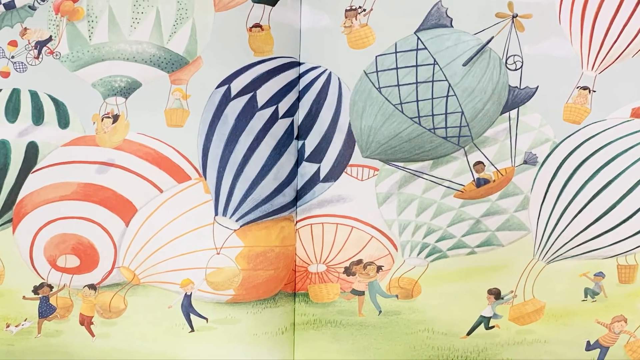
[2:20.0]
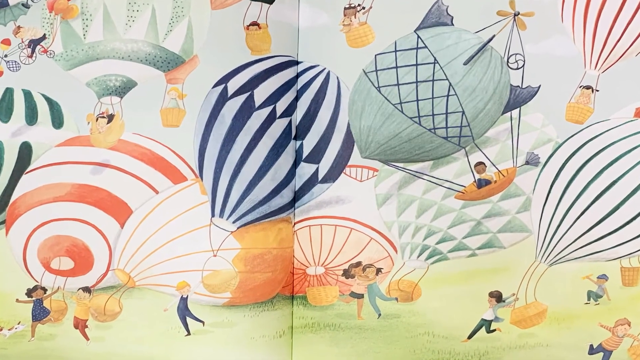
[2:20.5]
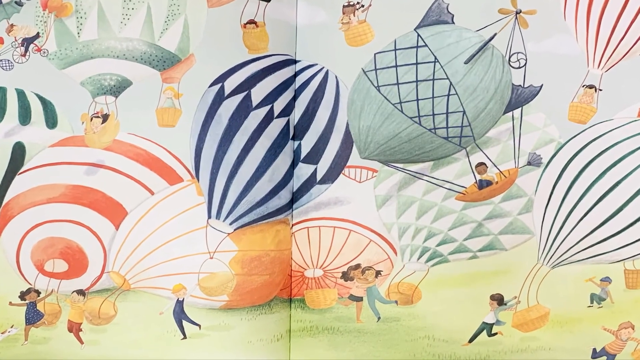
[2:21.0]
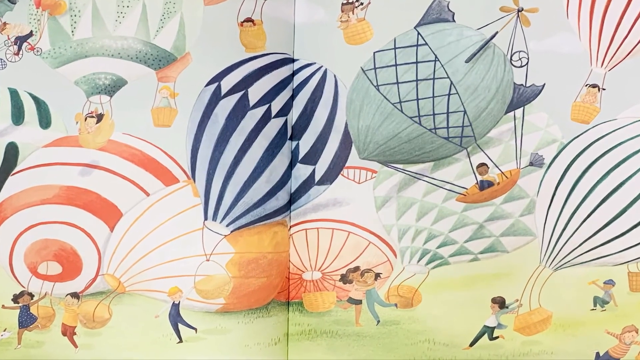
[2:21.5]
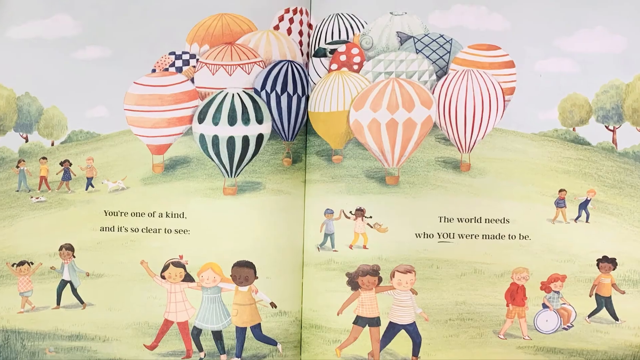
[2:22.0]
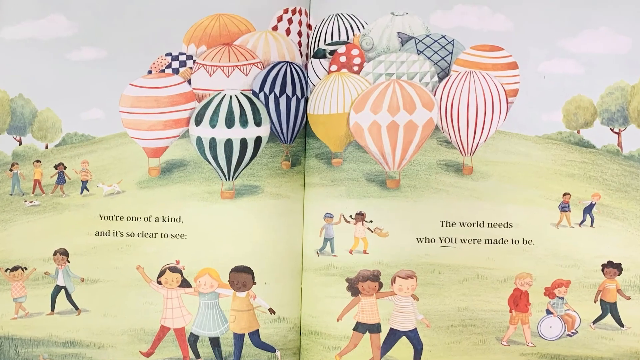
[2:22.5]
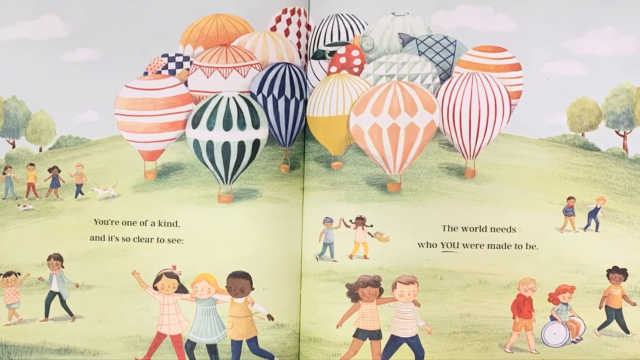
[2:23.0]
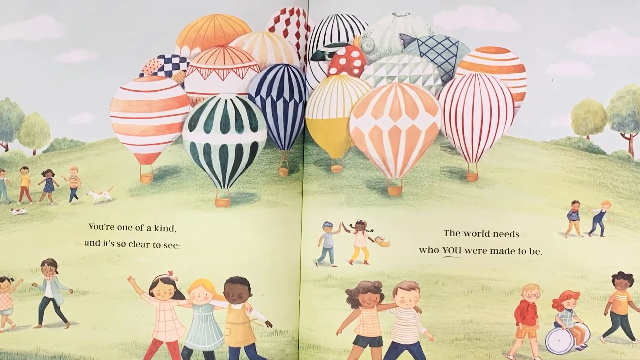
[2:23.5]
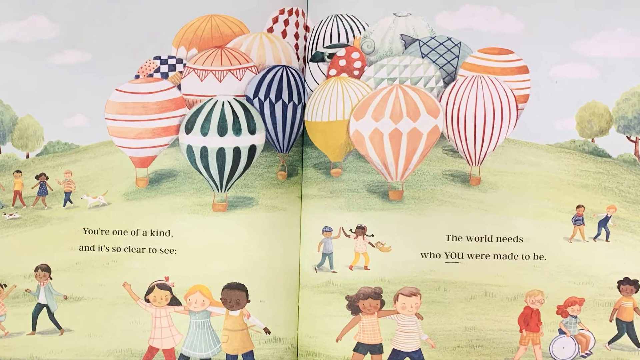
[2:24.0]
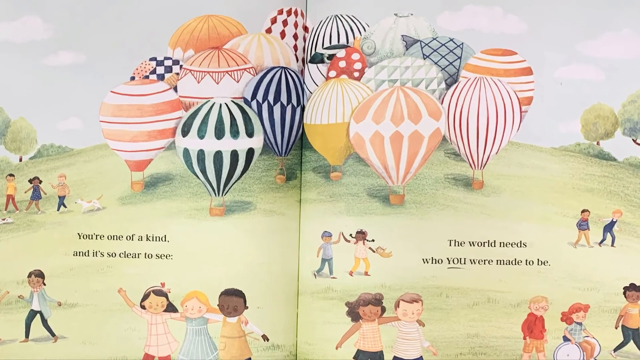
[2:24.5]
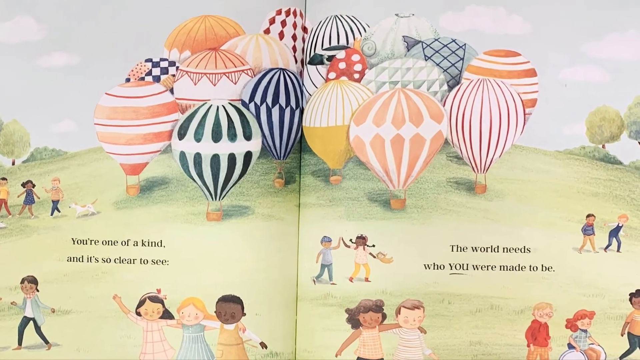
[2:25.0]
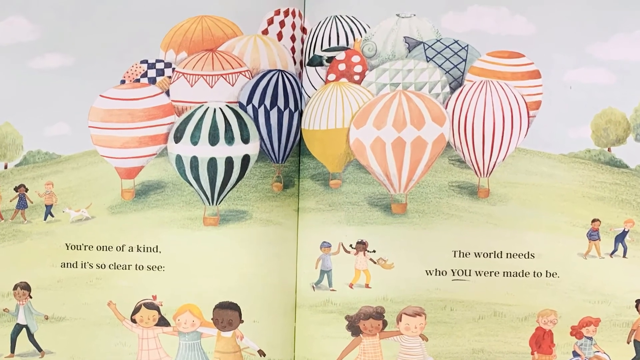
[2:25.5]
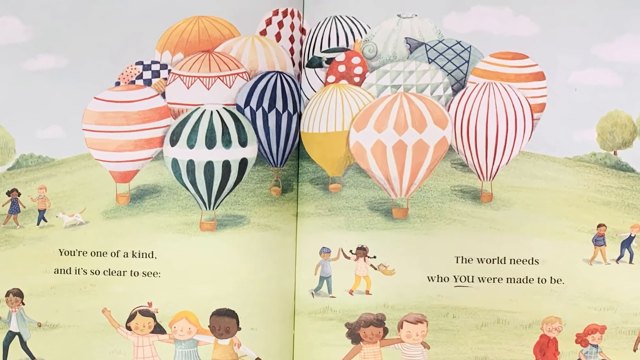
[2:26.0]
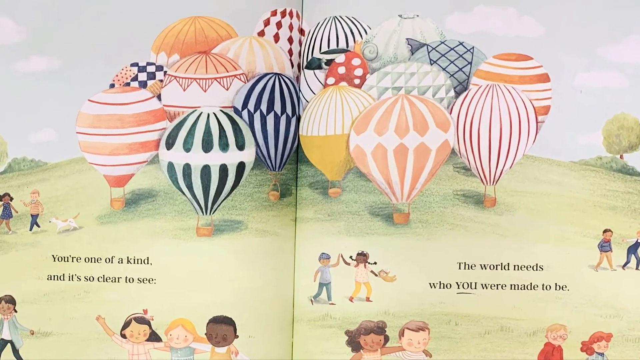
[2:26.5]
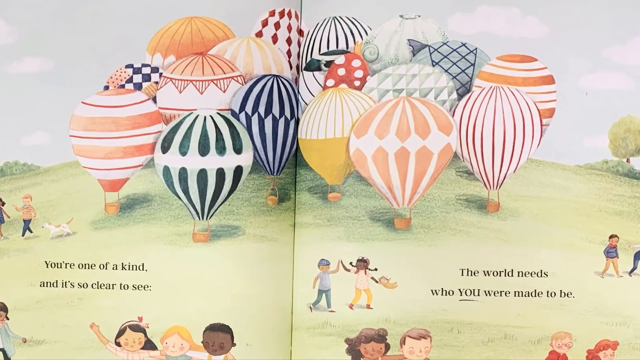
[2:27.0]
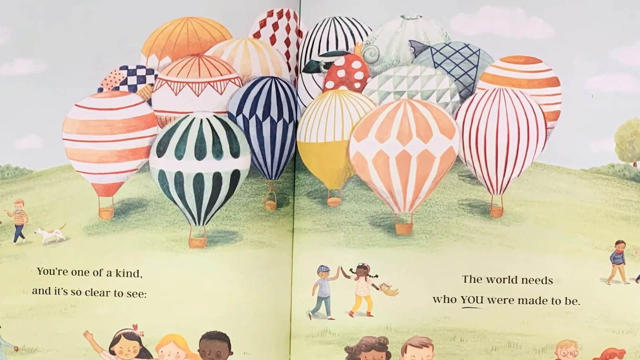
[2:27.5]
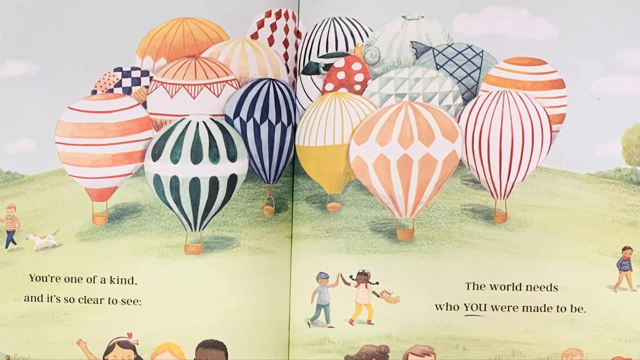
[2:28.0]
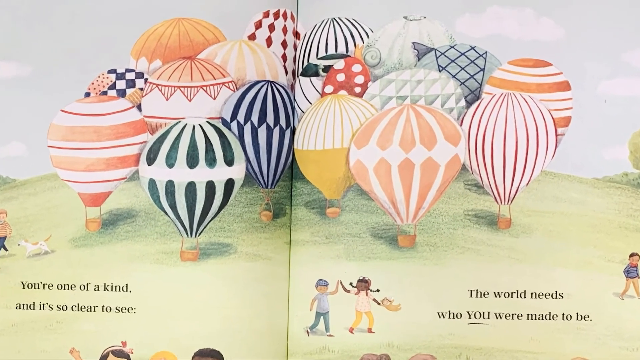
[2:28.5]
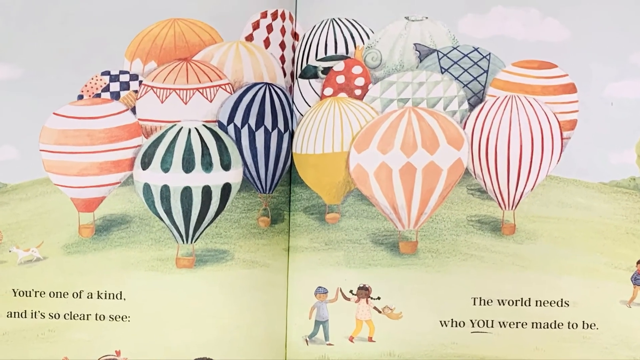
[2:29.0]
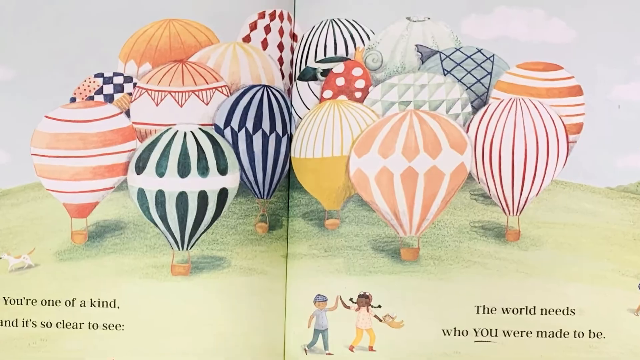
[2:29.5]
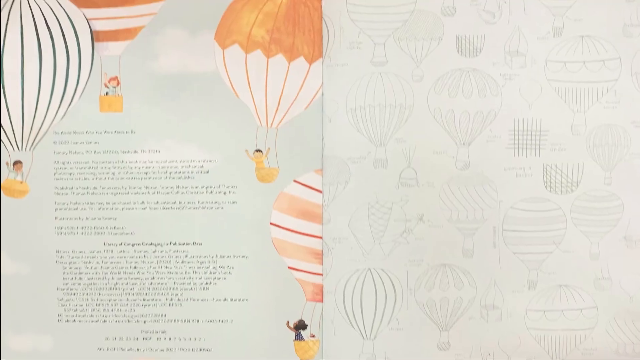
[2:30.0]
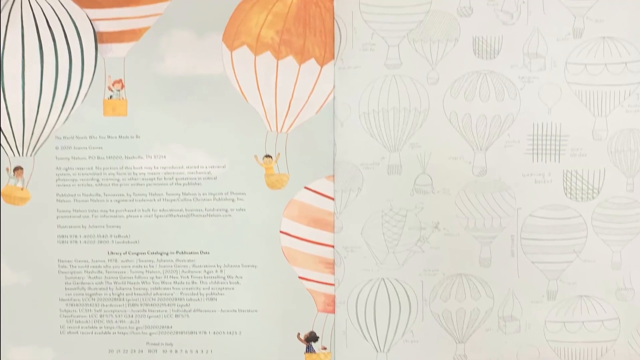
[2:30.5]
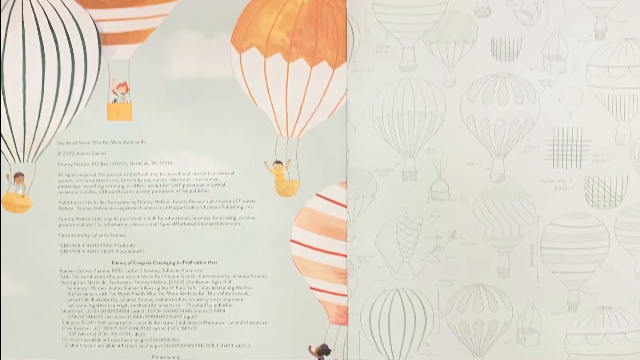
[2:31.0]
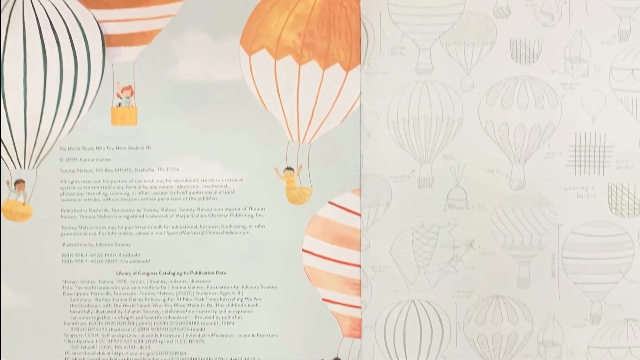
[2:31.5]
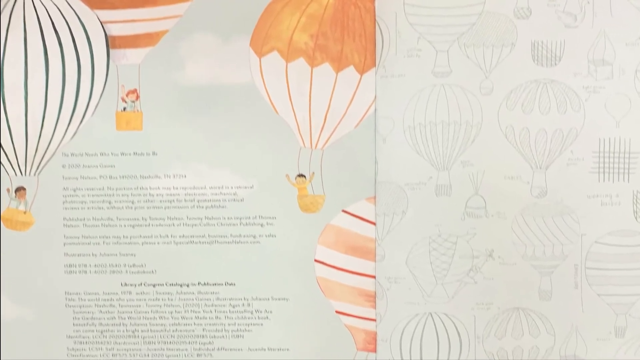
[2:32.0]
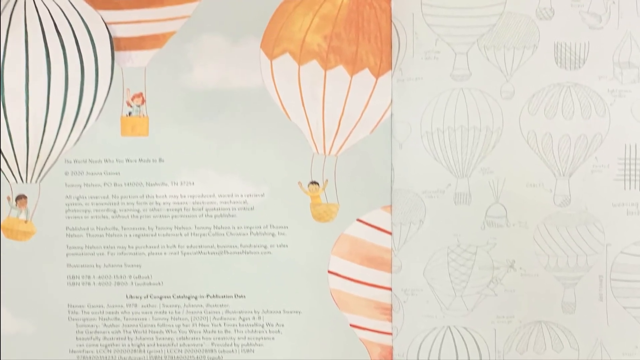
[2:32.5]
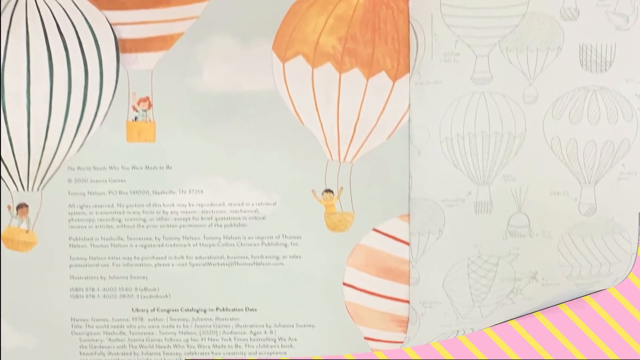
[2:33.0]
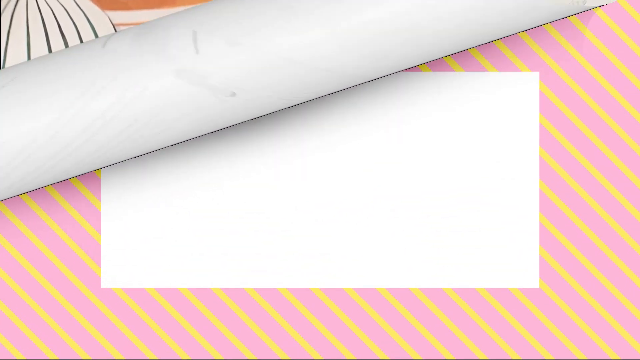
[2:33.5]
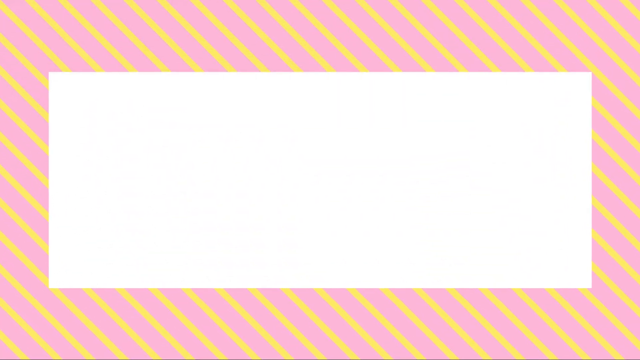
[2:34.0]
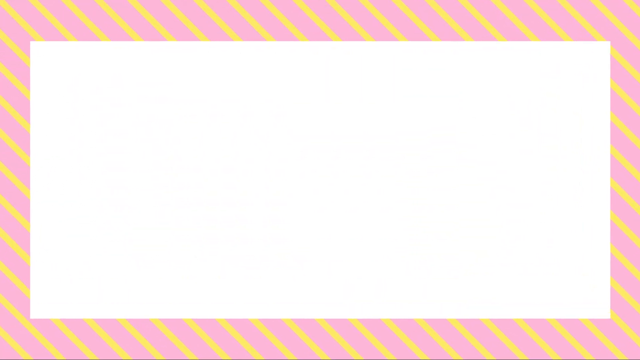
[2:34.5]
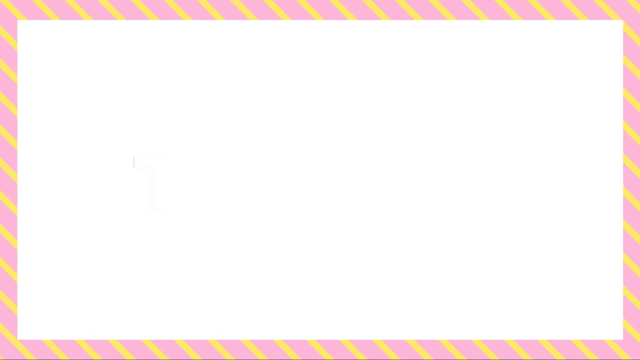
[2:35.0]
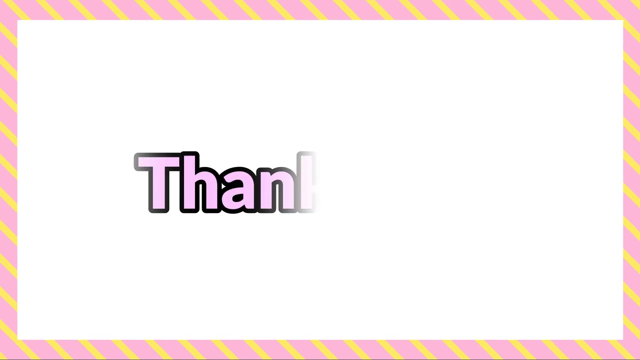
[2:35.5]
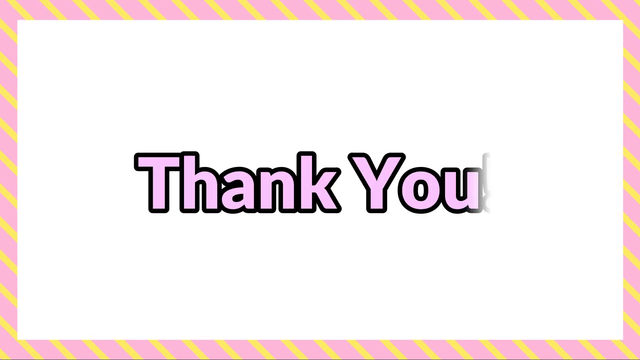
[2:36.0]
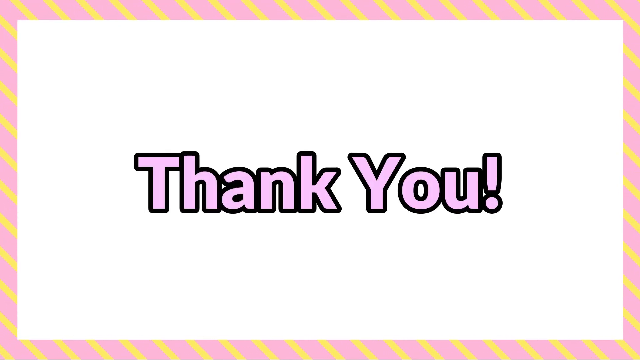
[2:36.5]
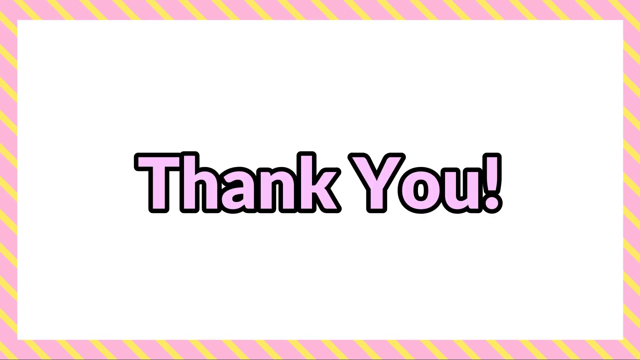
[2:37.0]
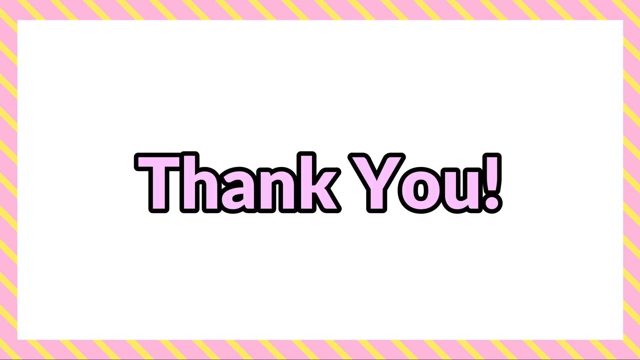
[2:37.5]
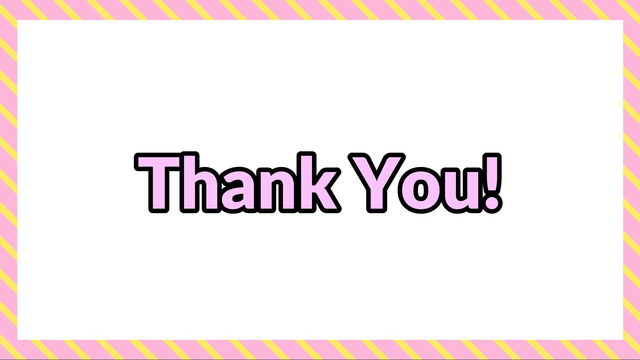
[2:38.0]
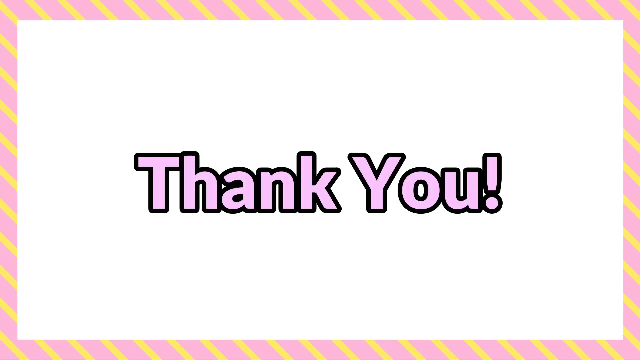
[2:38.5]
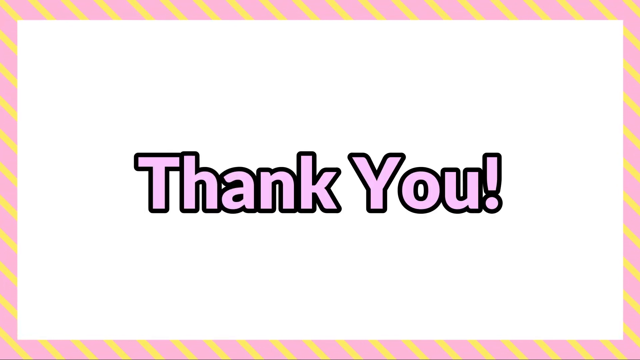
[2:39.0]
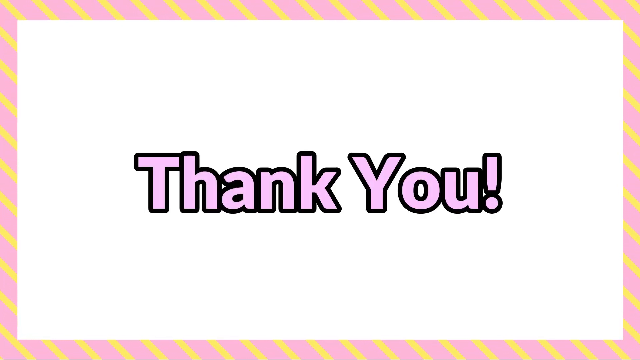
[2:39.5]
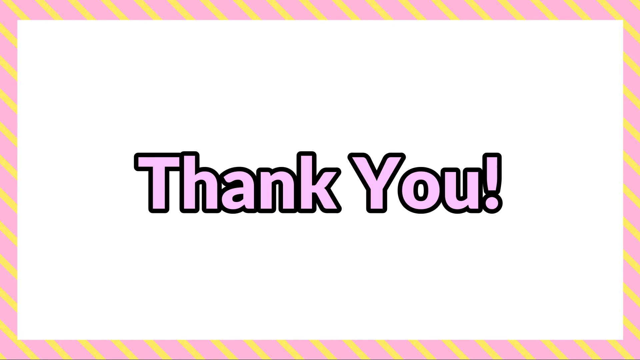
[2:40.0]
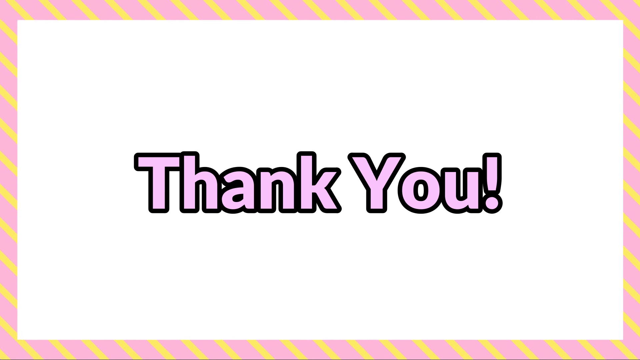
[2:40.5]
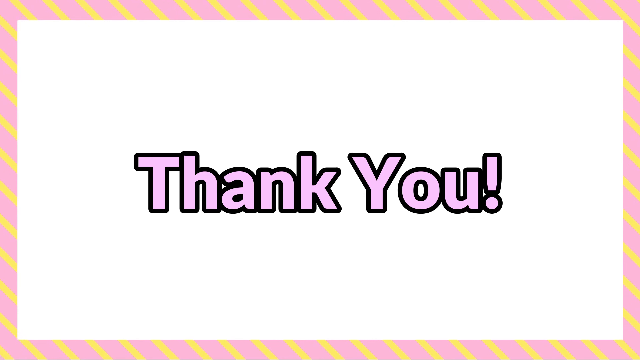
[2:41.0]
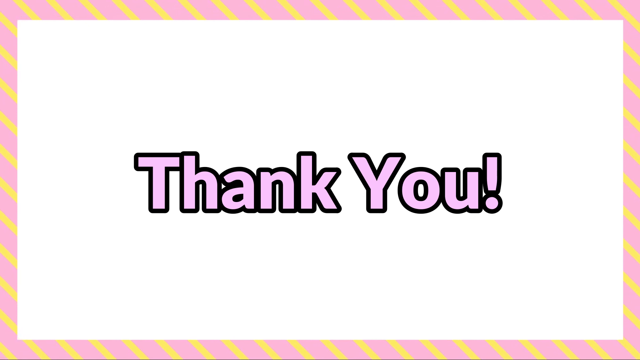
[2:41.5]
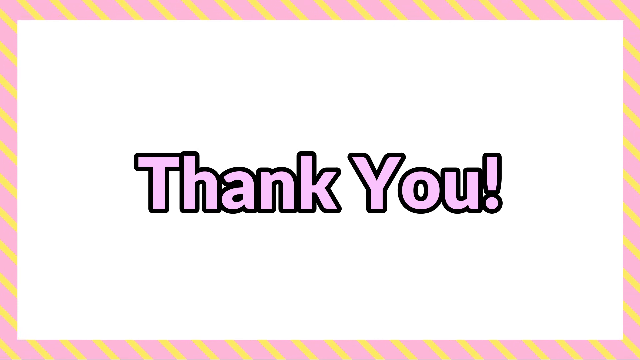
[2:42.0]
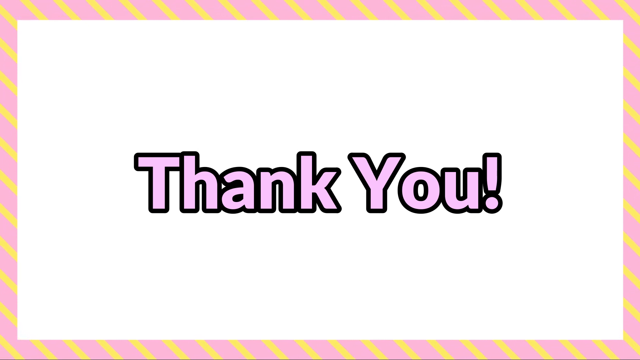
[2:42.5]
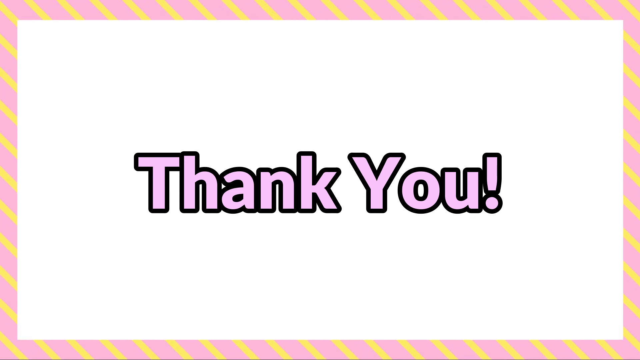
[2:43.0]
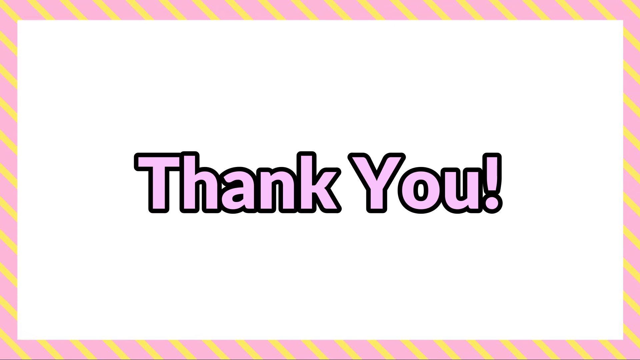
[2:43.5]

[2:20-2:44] A storybook page is open, with a merged scene continuing across the left and right pages. Many hot air balloons that were mid-air are landing; some have already landed and sit on the ground. Lots of children jump jubilantly, looking excited, and some embrace each other, happy to have landed their balloons, while other balloons are kind of mid-flight, floating down towards the ground. The balloons come in many shapes and colours with different baskets, including one with a bicycle and one with a propeller. The next page shows all the hot air balloons, kind of filled with air and ready to take flight. The left-hand page reads "you're one of a kind, and it's so clear to see", and the right-hand page says "the world needs who you were made to be", with the "you" underlined in capitals. The balloons stand upright with air in them on a green hill with little trees, and children in different groups smile, hold hands and embrace each other. The camera slowly zooms in on the hot air balloons they have been building. The book then turns to the end page: on the left is information about the publishers and the year of publication, with some hot air balloon embellishment, and on the right is just a hot air balloon pattern. The final page says "thank you" in pink writing with black borders on a white background with a pink and yellow zigzag border.